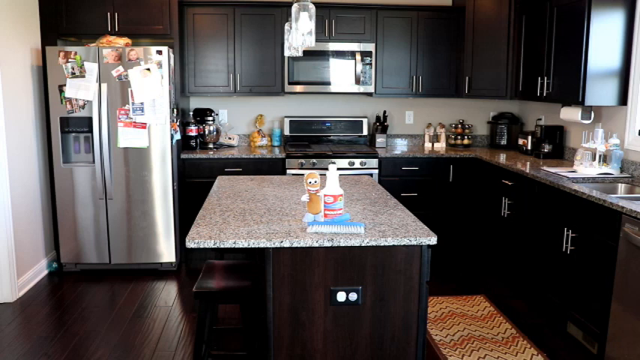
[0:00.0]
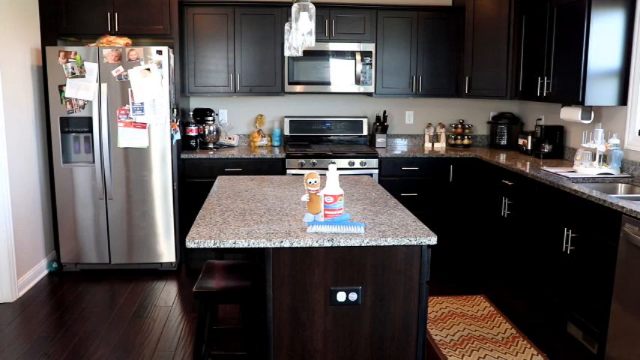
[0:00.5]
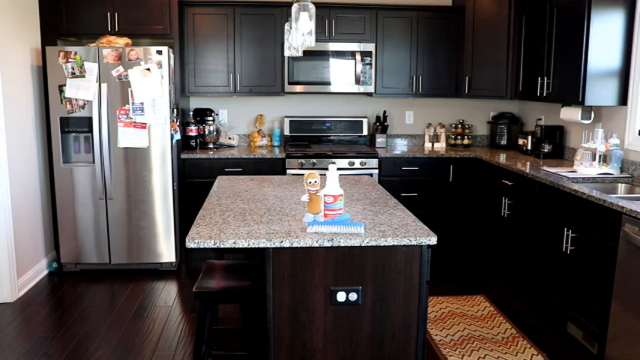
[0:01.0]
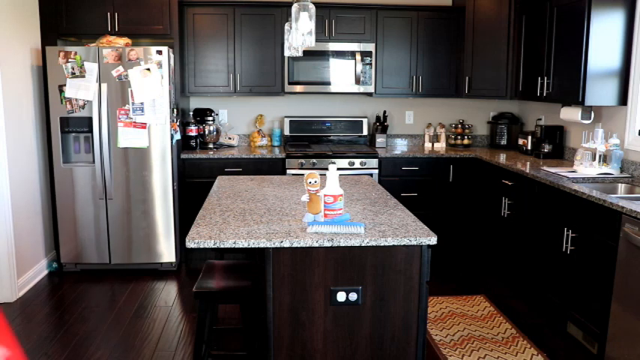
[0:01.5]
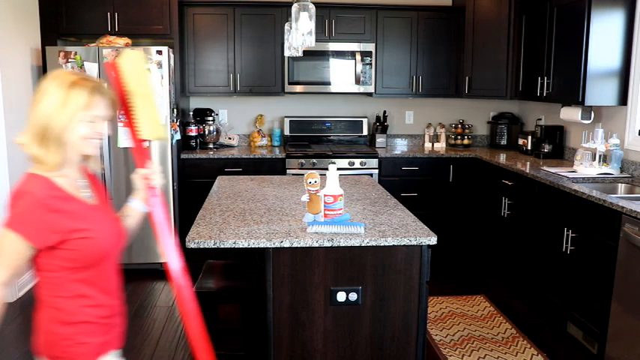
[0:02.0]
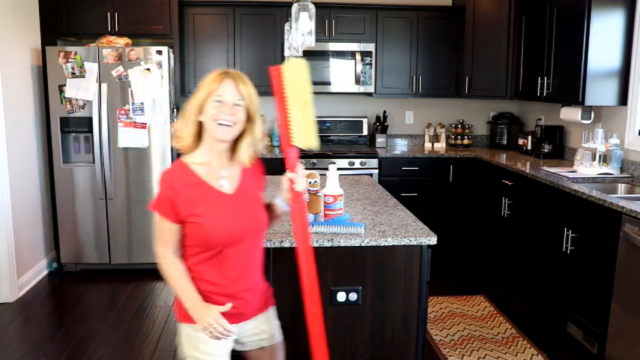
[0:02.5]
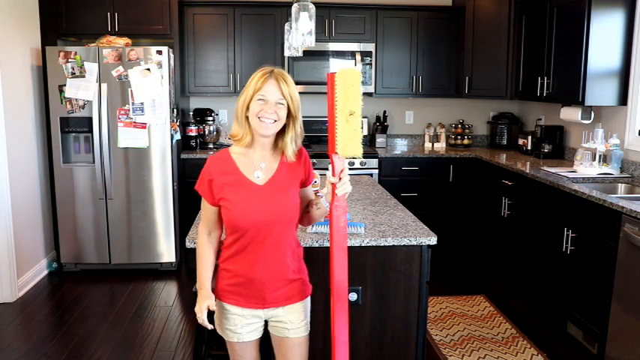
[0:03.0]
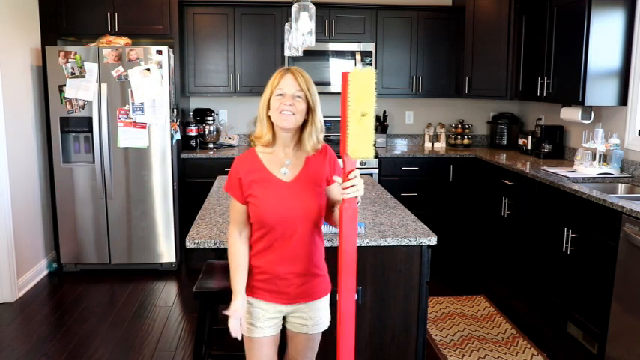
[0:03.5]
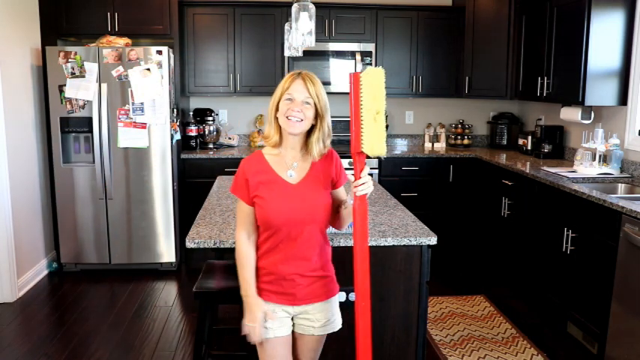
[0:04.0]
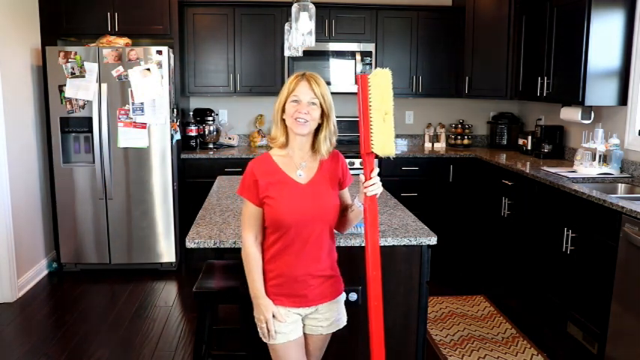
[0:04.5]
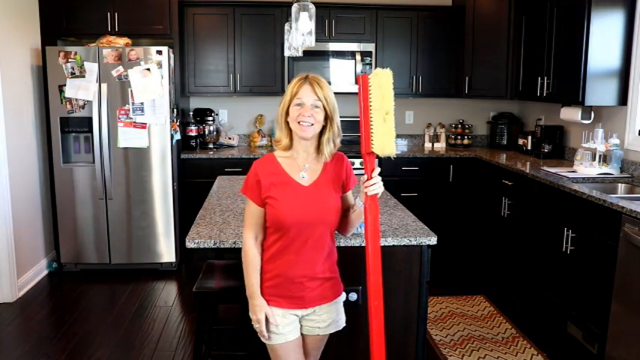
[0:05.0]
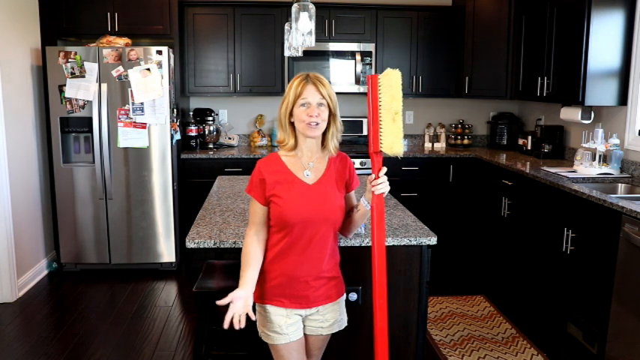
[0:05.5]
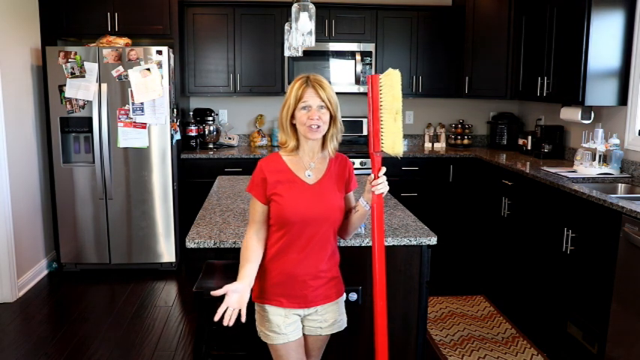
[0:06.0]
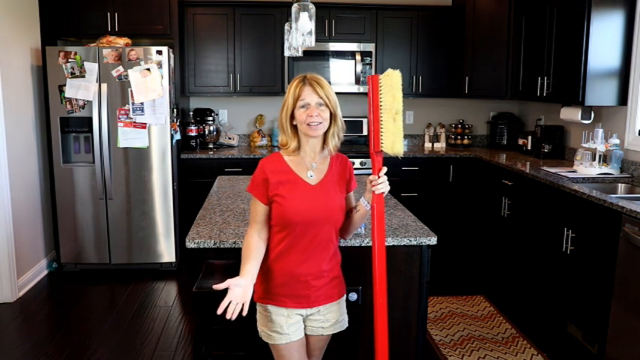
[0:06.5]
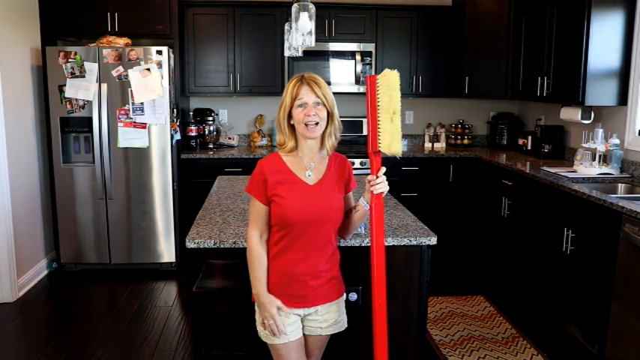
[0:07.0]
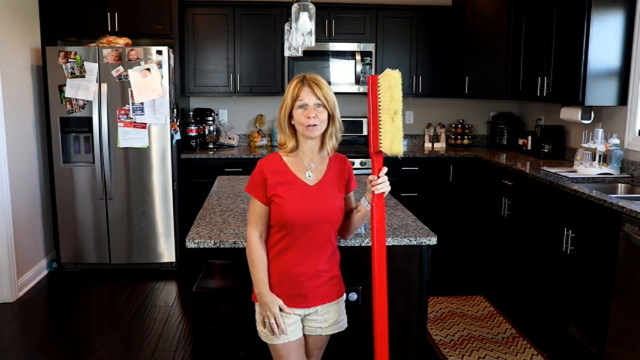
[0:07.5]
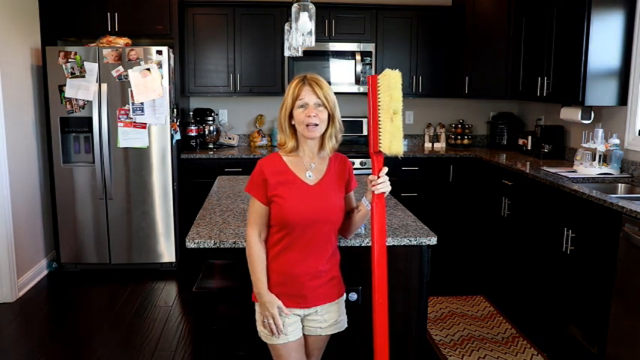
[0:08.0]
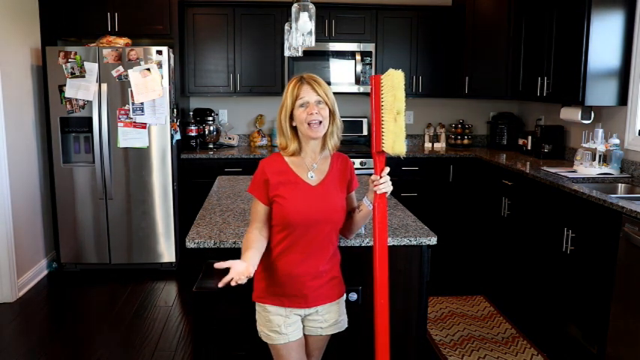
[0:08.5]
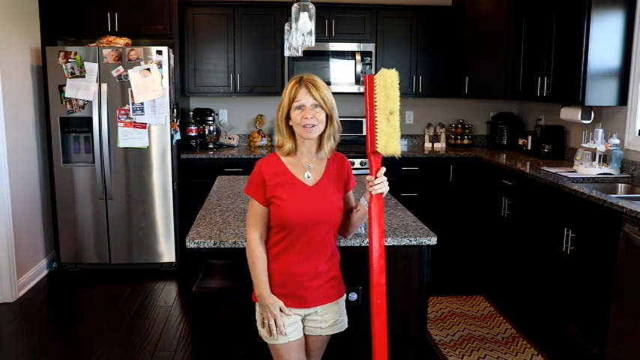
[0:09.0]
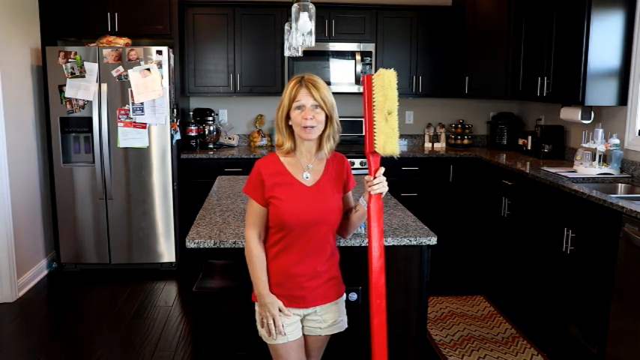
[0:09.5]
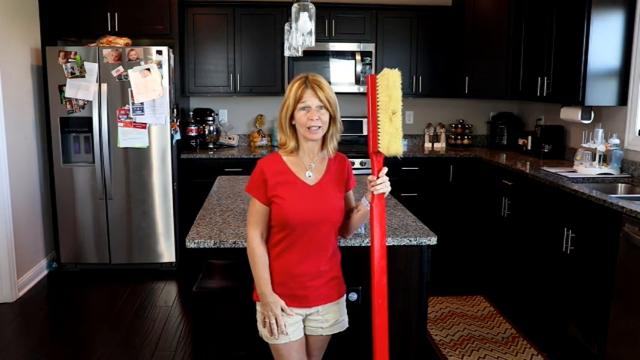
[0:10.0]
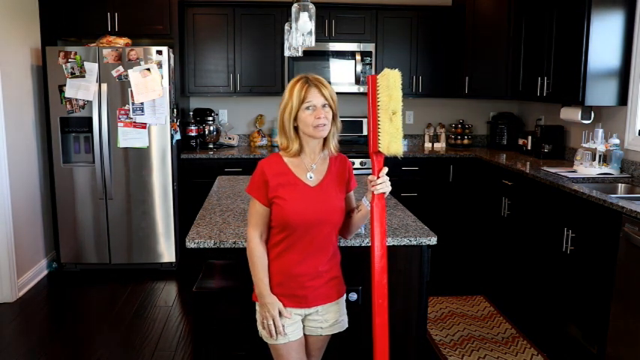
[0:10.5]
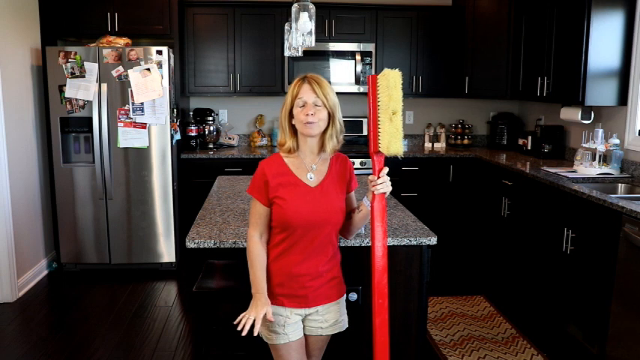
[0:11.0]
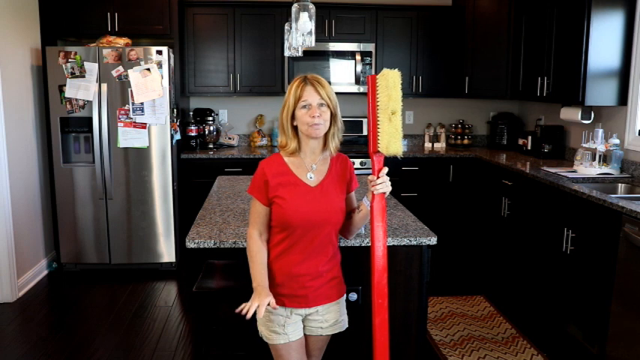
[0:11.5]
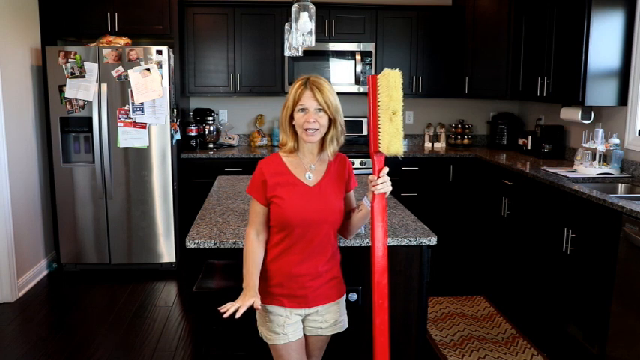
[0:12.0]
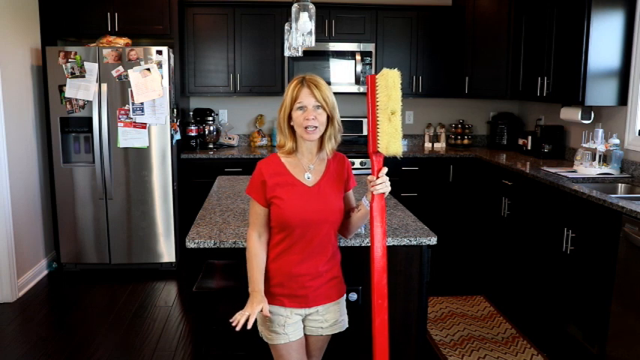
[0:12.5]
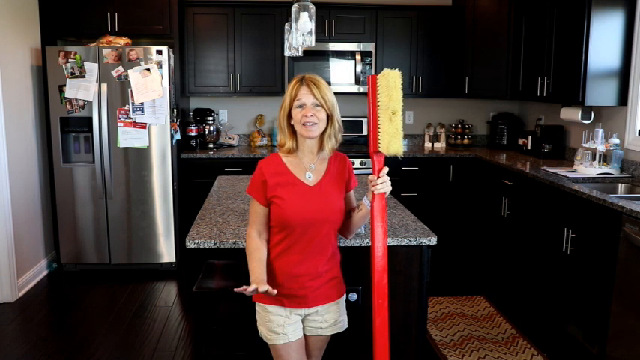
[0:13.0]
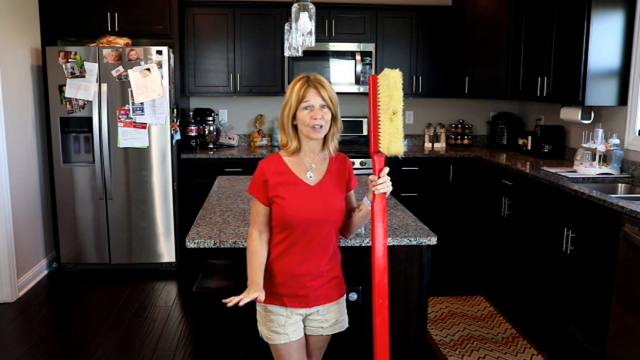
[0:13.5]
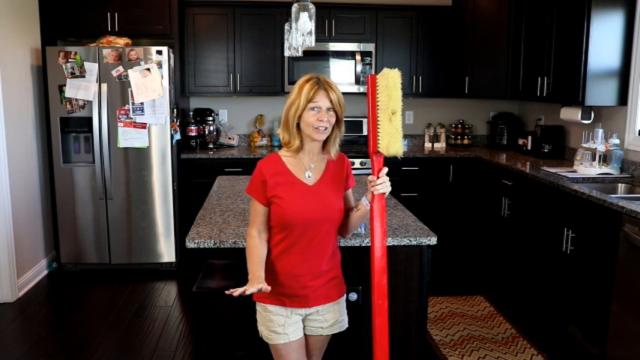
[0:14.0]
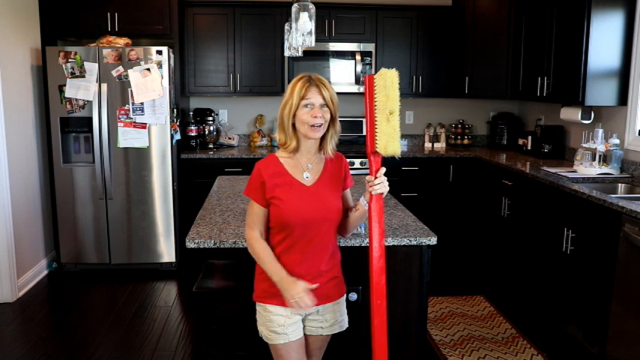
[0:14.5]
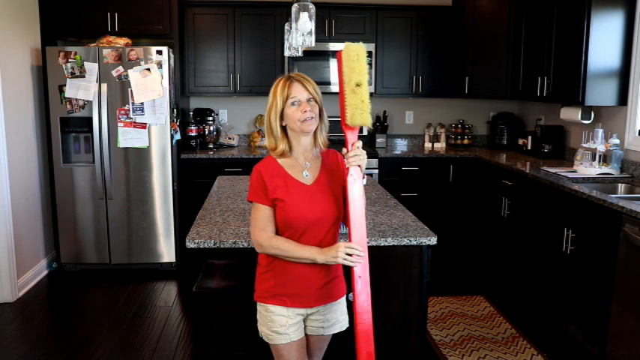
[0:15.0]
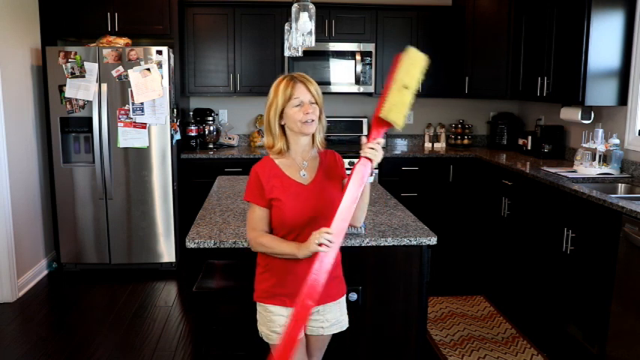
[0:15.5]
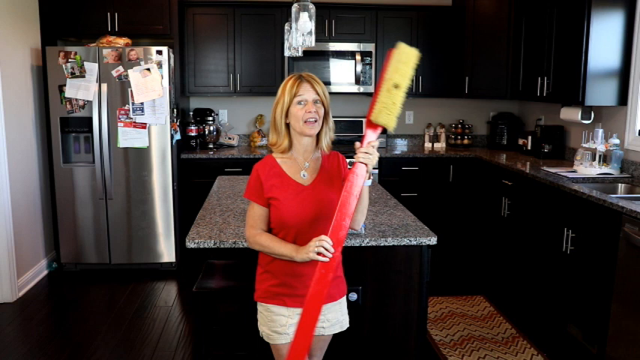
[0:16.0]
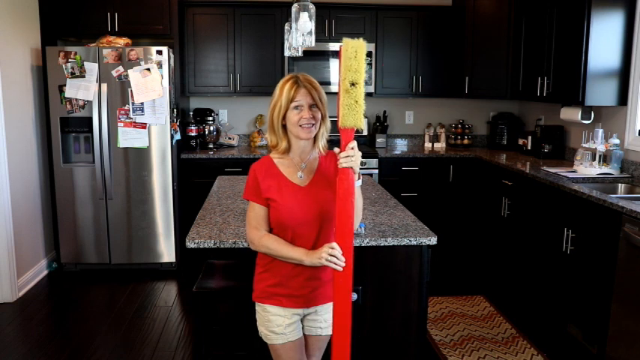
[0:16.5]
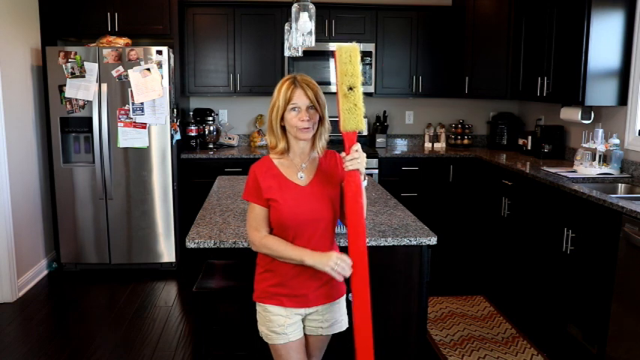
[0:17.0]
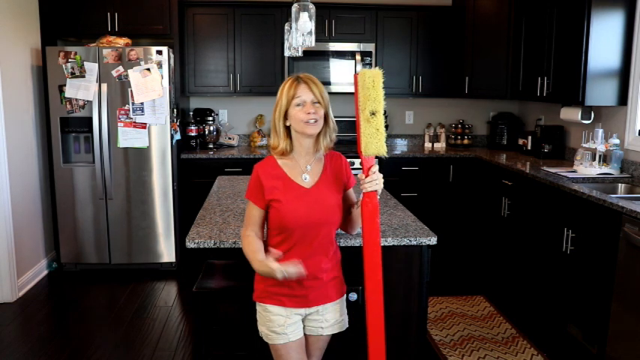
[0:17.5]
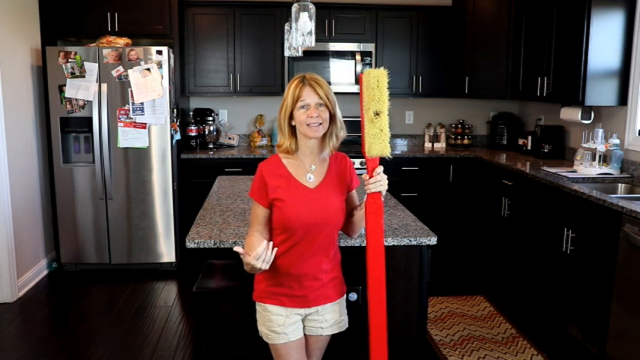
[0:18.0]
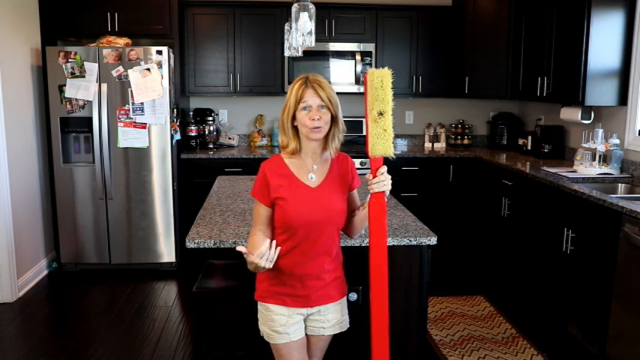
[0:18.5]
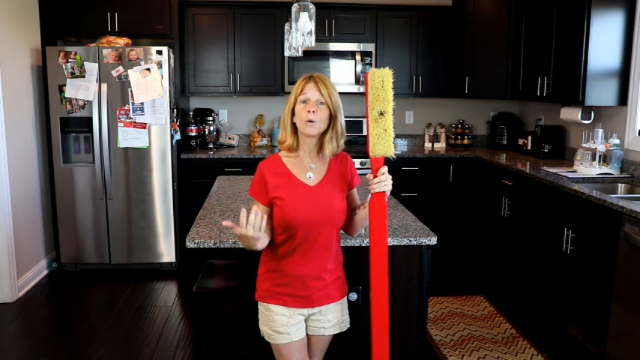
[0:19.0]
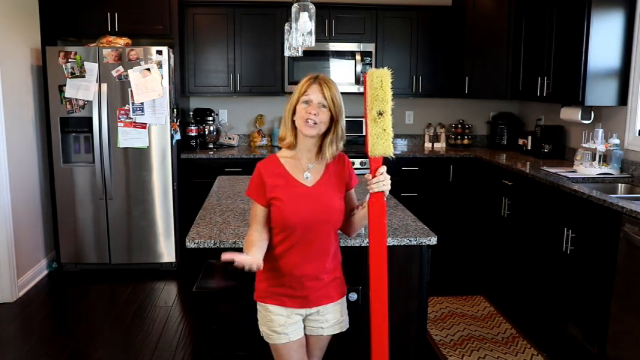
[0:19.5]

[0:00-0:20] The scene is a kitchen with a gray and black granite countertop, a black, dark brown hardwood floor, and dark brown cabinets up top and on the bottom with silver-lined handles. A silver double-door fridge is on the left, with a white wall and white frame to the left side. A gray and black screened microwave is just above the black and silver stove, and a gray sink is on the right side. What looks like a black coffee machine is in the corner, and a black and silver mixing bowl is on the left. In the center there is a white bottle with a black label and a blue handle with a white brush, and to the left of that seems to be a brown-looking bottle with a black and white eyed, smiling little creature. A white woman appears with blonde hair, a red short-sleeved top and gray shorts. She holds a large red toothbrush with yellow bristles and talks to the camera. A cream and red lined carpet is on the right side, a white towel roll is at the far right just under the cabinetry, and some white sheets of paper are on the fridge doors.